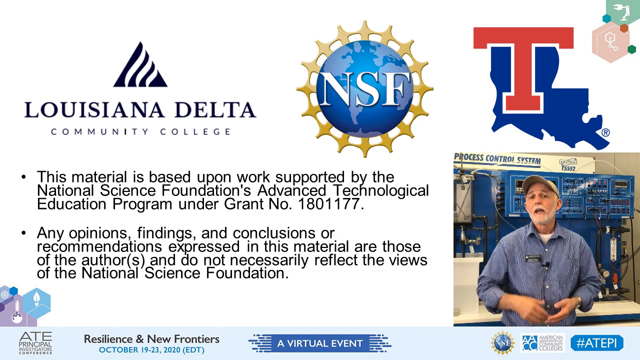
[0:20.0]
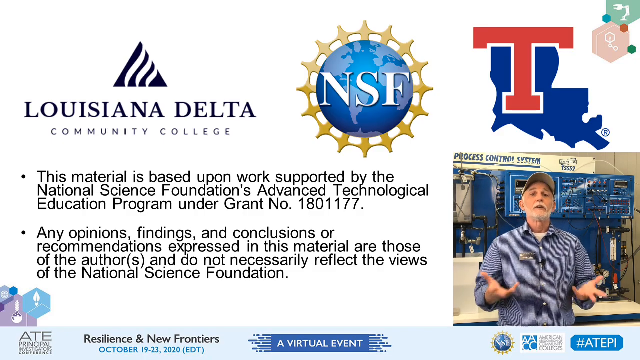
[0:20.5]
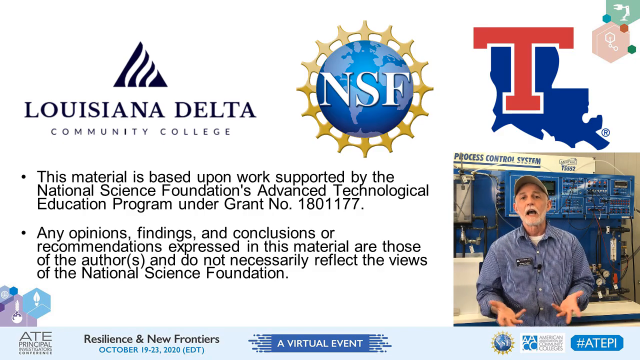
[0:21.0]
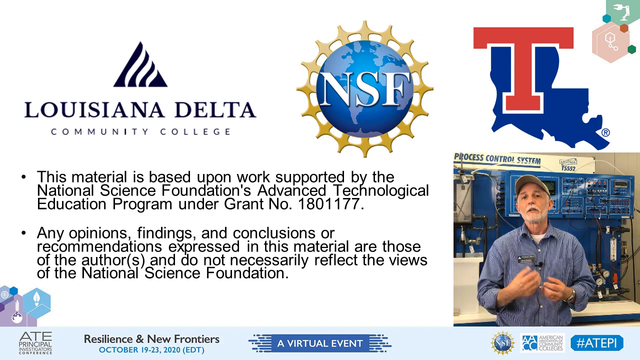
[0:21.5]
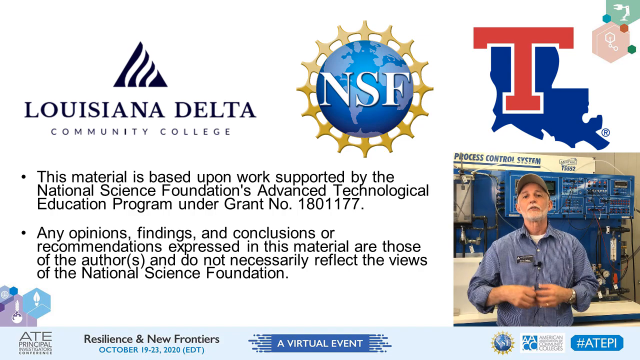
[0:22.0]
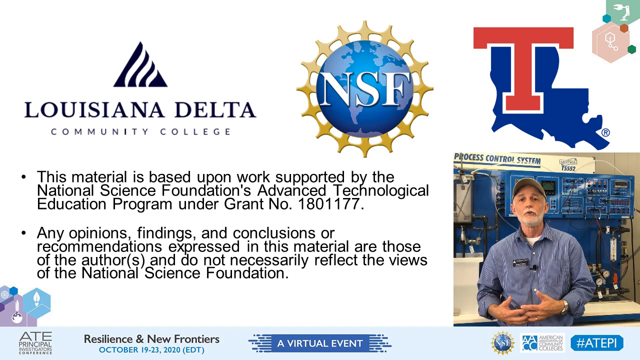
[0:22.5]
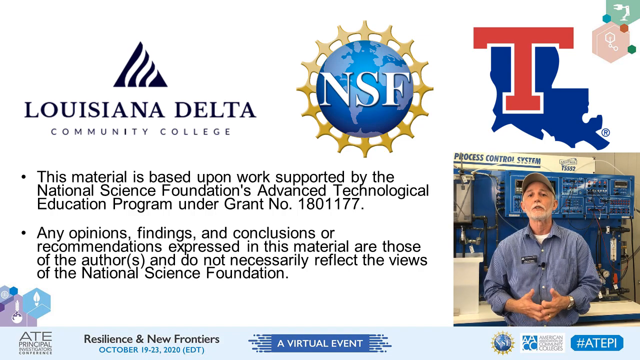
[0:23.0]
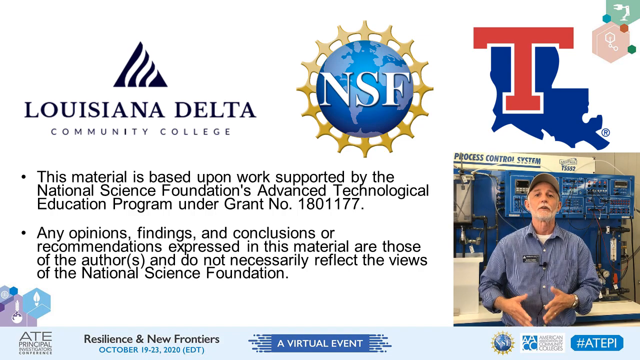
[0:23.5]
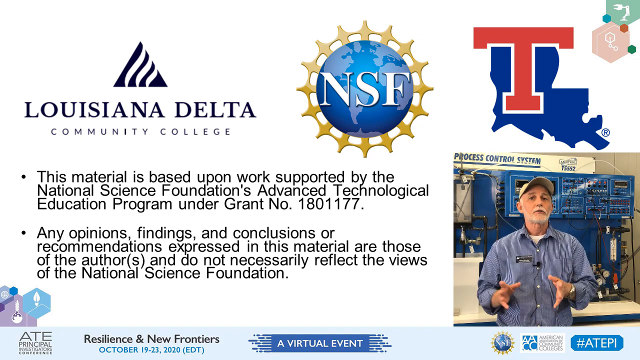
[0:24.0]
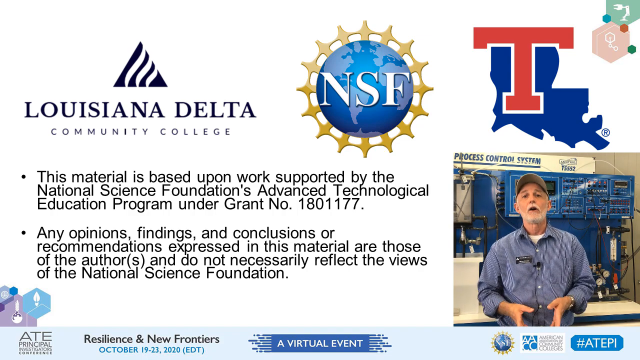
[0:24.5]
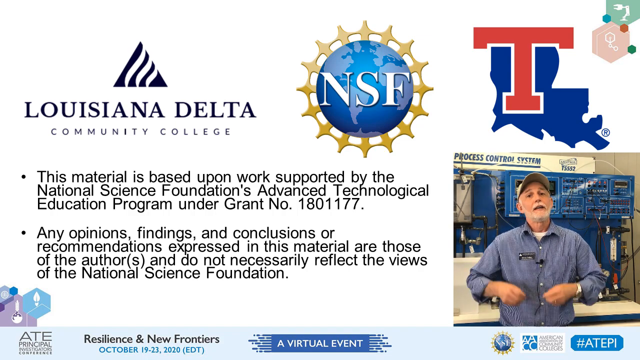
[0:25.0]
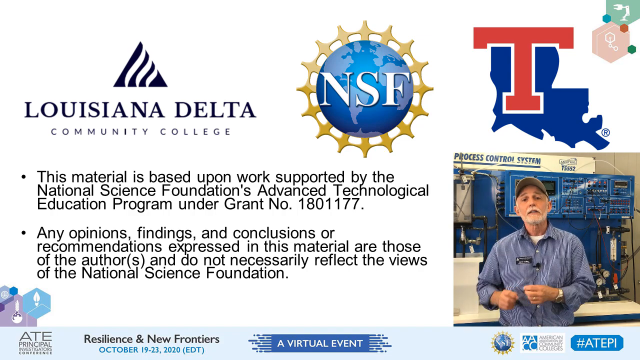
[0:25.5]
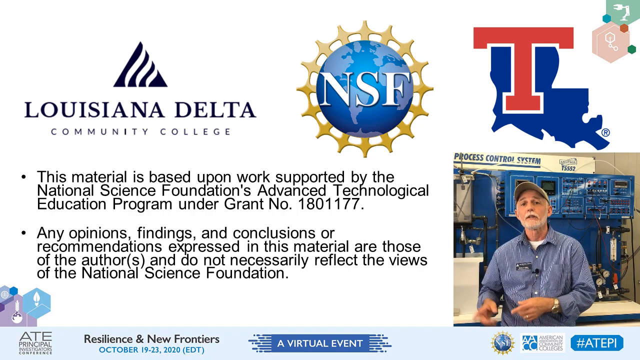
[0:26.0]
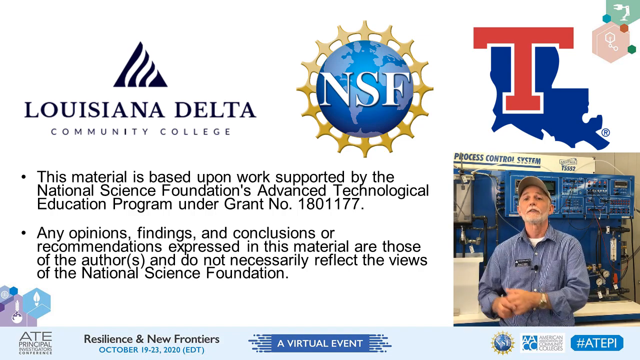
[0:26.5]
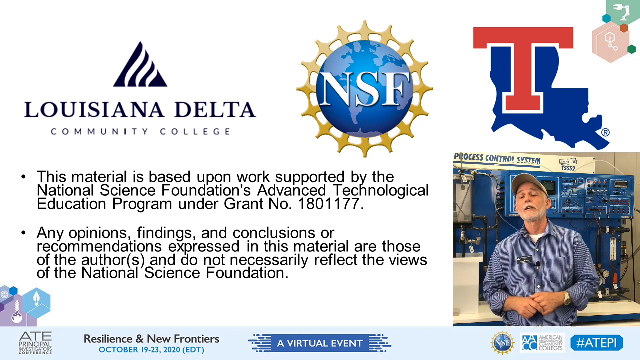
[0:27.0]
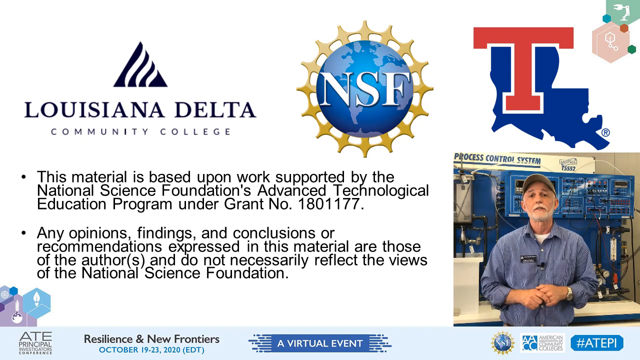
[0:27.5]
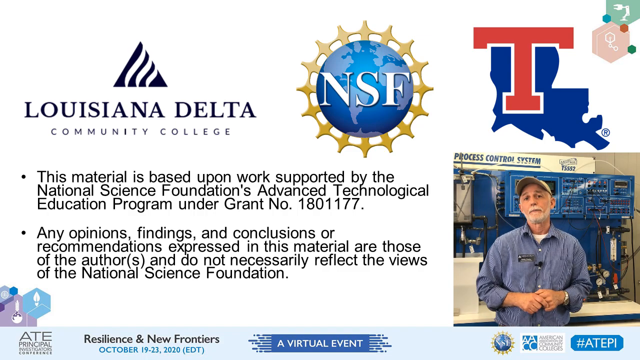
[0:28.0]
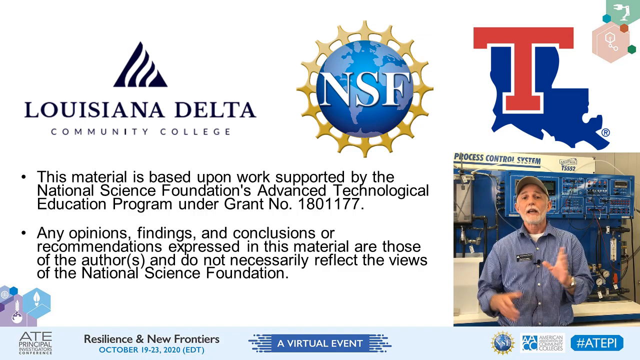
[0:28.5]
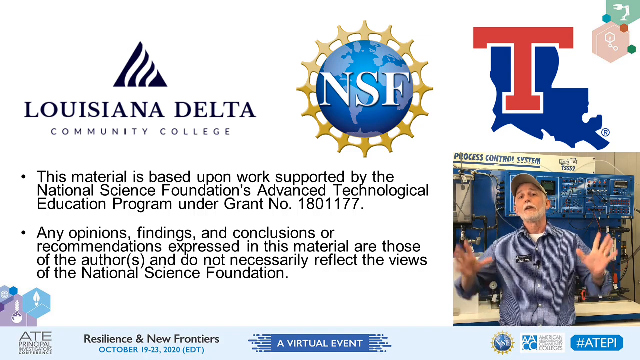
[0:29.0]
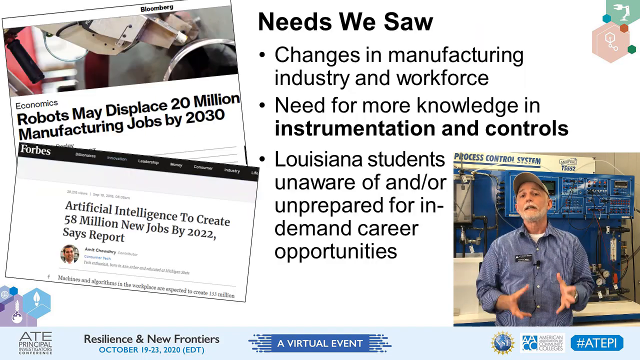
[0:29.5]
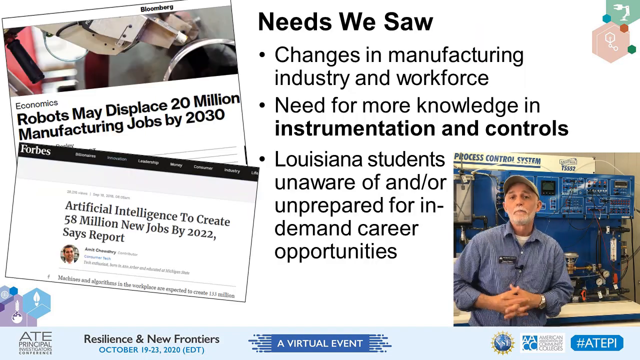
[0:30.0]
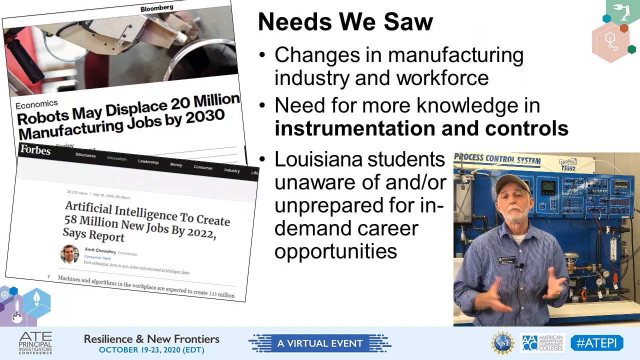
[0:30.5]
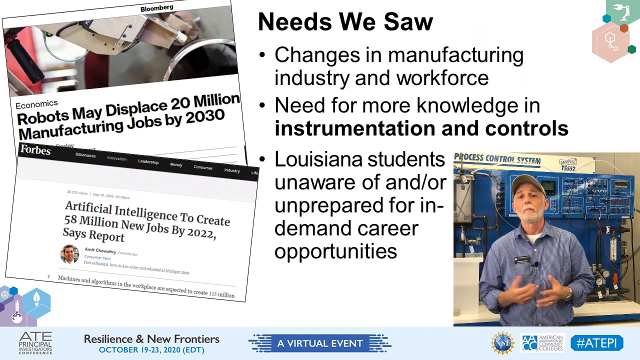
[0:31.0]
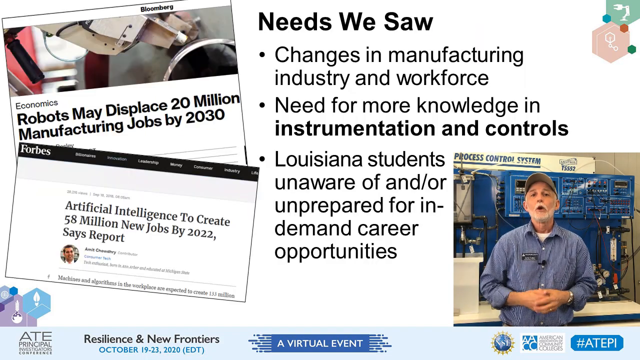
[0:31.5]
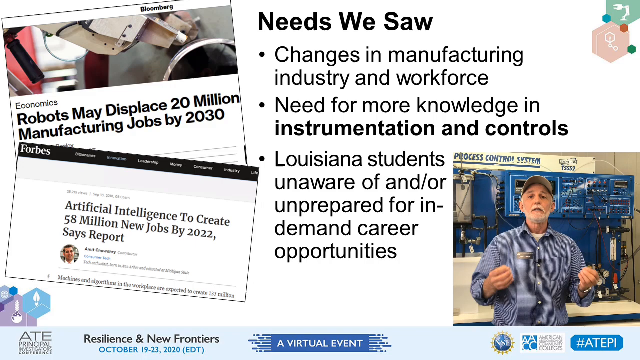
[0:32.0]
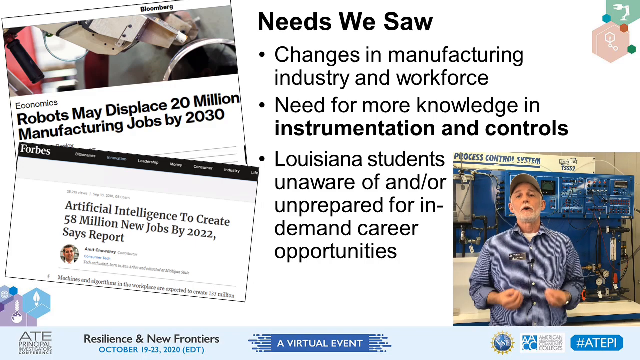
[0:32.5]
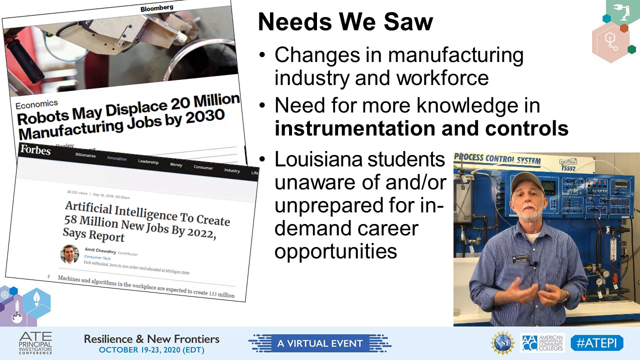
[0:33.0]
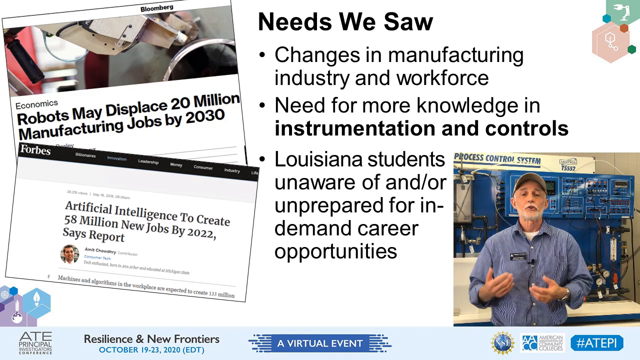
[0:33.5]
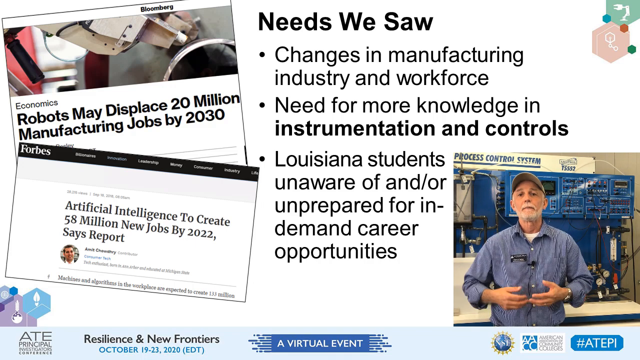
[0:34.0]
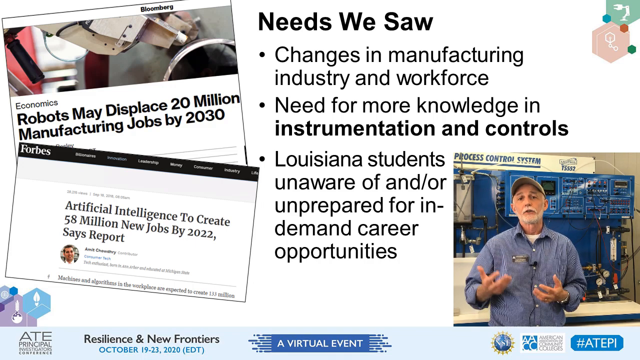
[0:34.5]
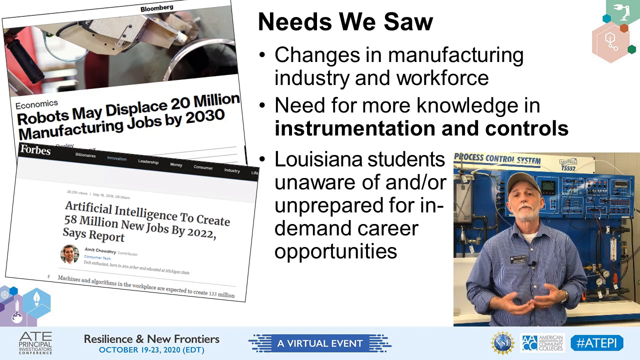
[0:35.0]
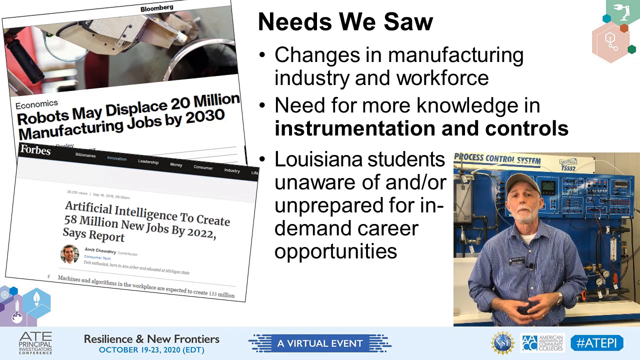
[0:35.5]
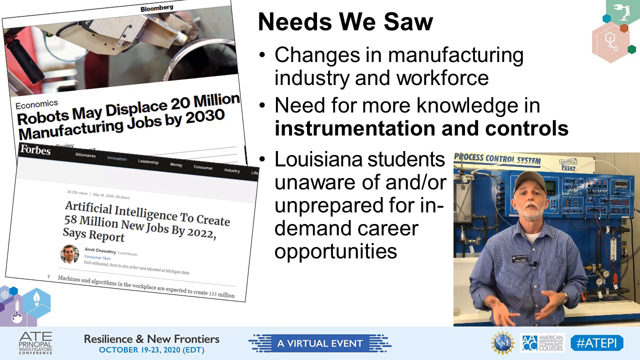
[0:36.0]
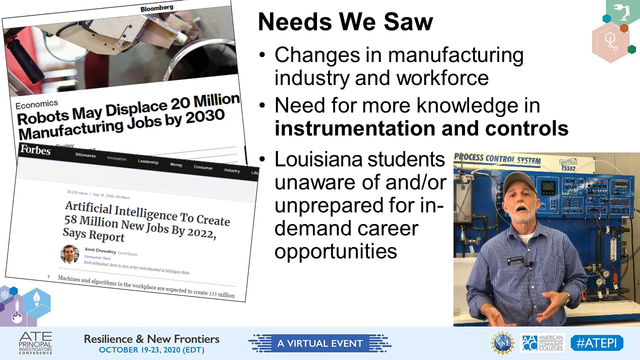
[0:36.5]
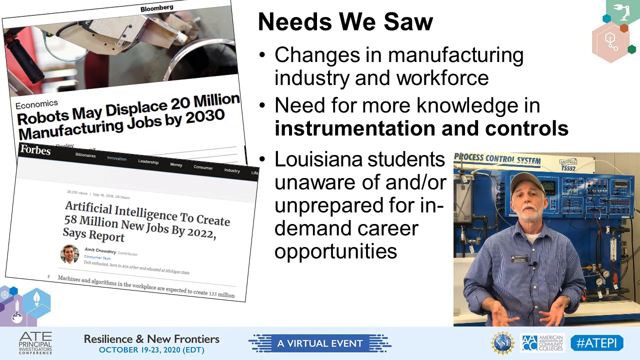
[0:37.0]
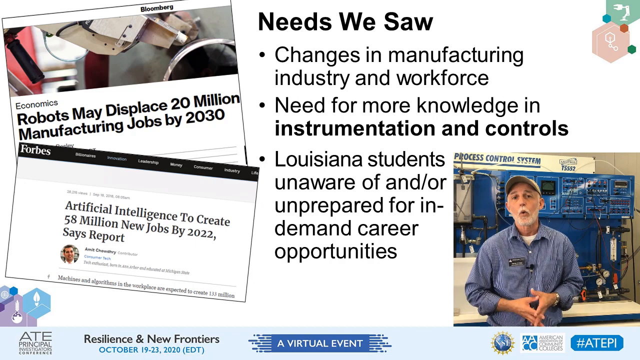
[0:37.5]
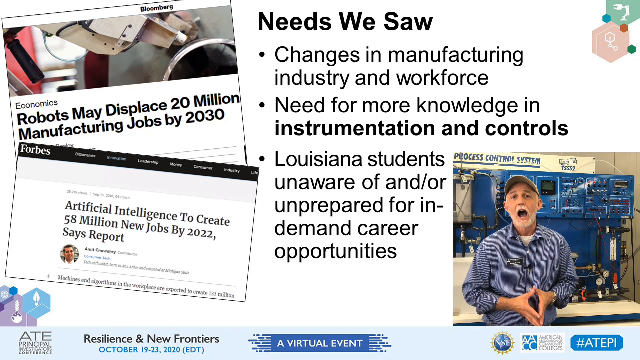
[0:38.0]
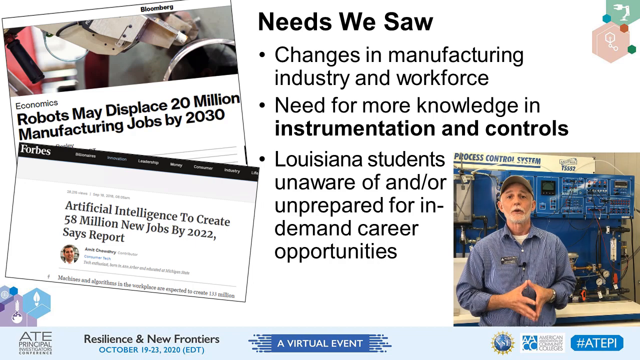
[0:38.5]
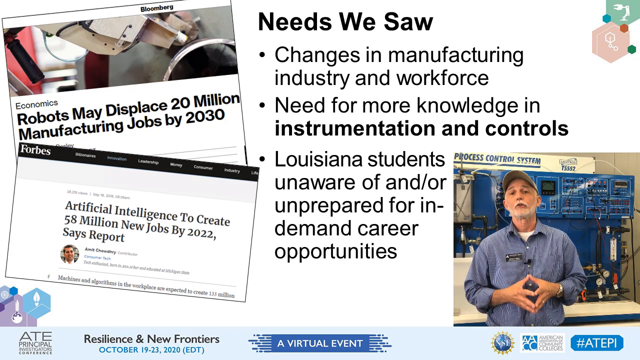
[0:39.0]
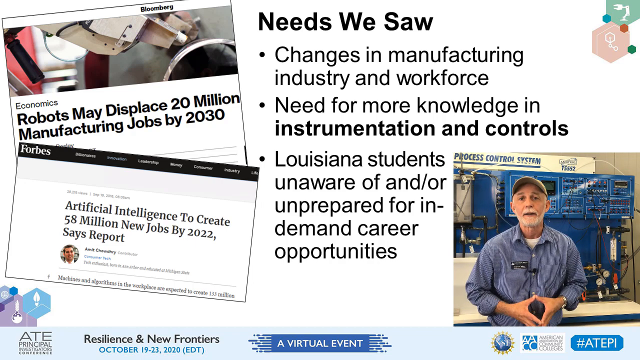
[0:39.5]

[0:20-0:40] The Louisiana Delta screen continues, with text naming Louisiana Delta Community College and stating that the materials are based on work supported by the National Science Foundation's advanced technology programs under a specific grant number. The same man is still shown. More text on the screen reads "any opinions findings and conclusions or recommendations expressed in this material are those of the author and do not necessarily reflect the views of the National Science Foundation." He keeps talking as the screen changes to another one reading "needs" and "we saw changes in manufacturing industry and workforce", noting a need for more knowledge in instrumentation and controls and that Louisiana students are "unaware and or unprepared for the demands of career opportunities." Some articles are shown, with headlines saying robots may displace manufacturing jobs by 2030 and "artificial intelligence to create 58 million new jobs by 2022, says report." Toward the end, only the one man is shown, talking about the information presented.